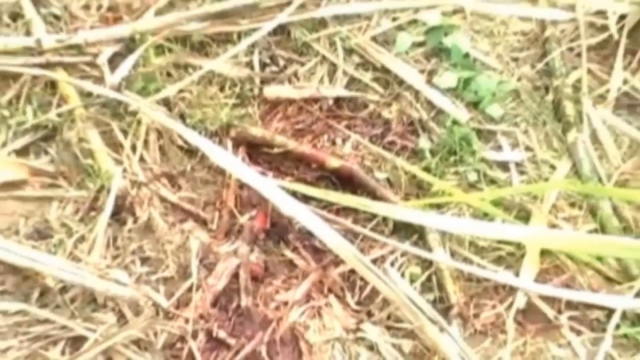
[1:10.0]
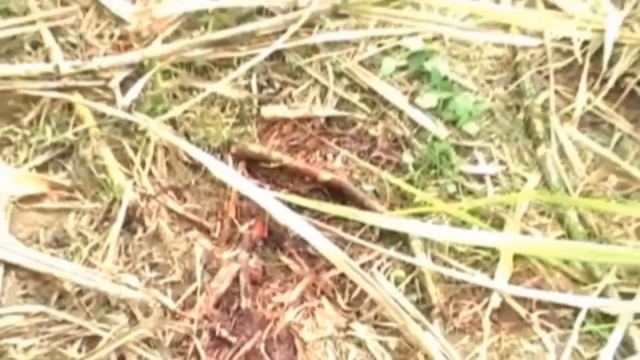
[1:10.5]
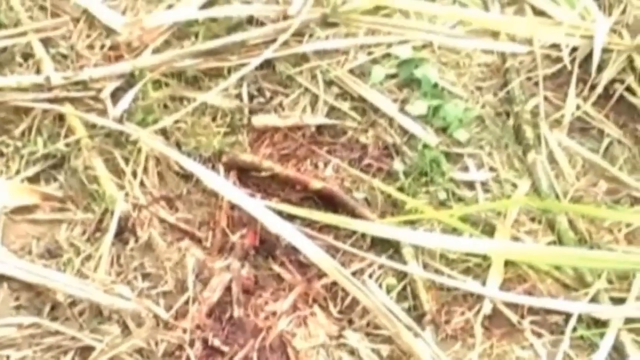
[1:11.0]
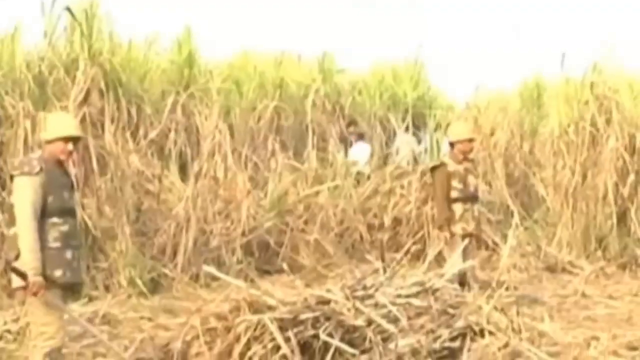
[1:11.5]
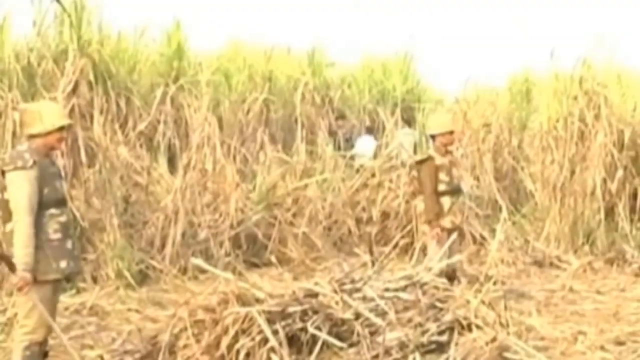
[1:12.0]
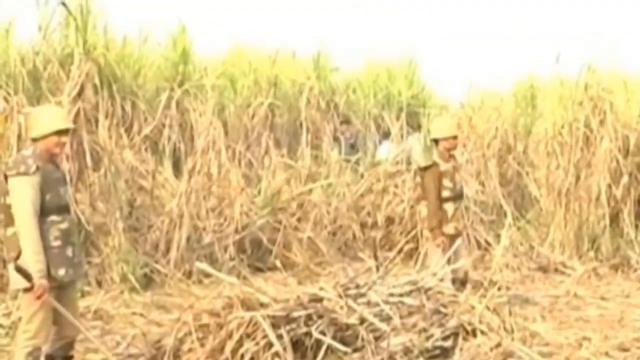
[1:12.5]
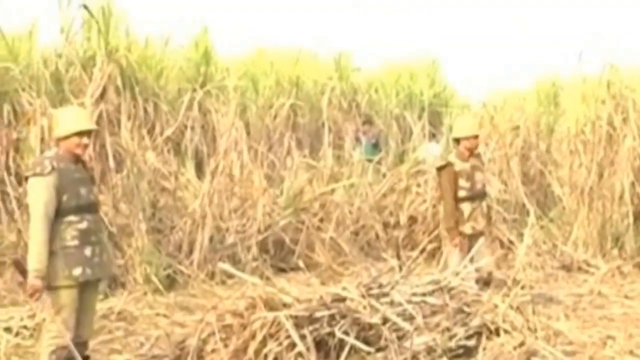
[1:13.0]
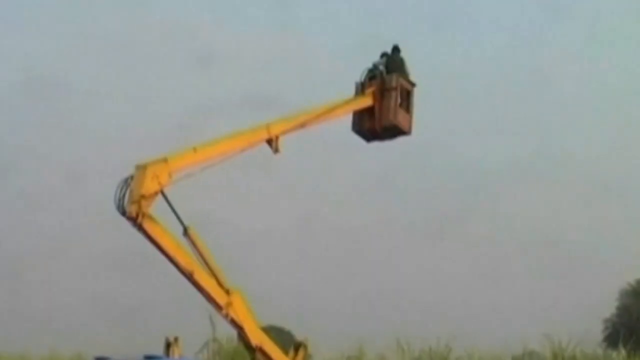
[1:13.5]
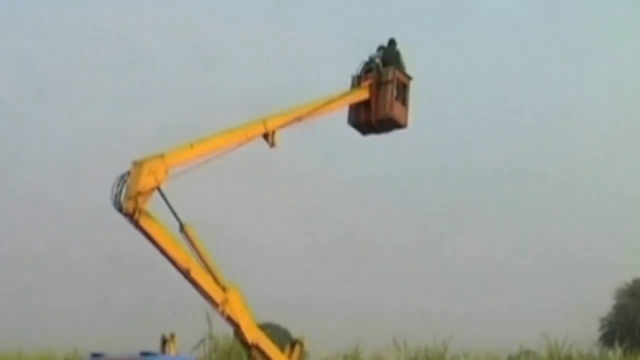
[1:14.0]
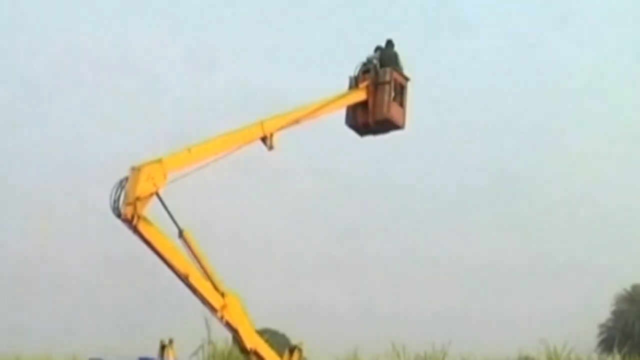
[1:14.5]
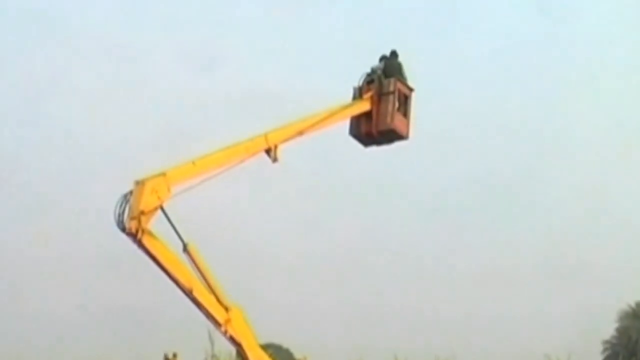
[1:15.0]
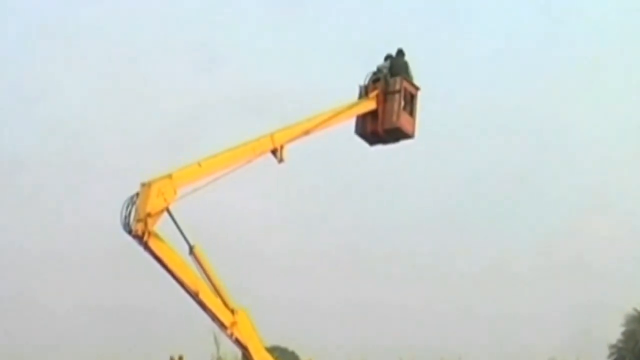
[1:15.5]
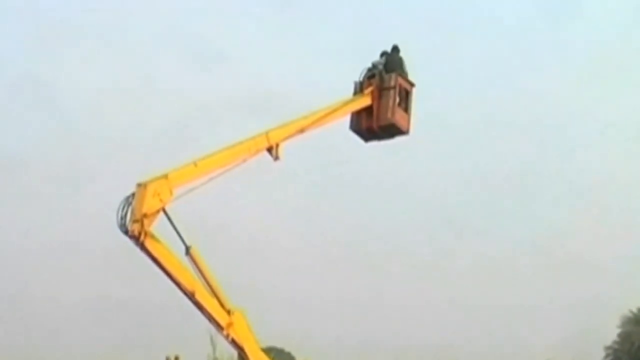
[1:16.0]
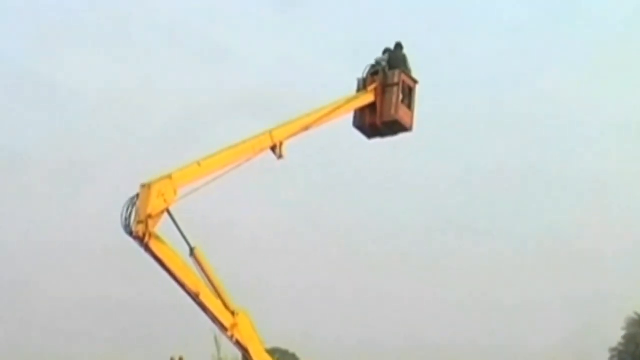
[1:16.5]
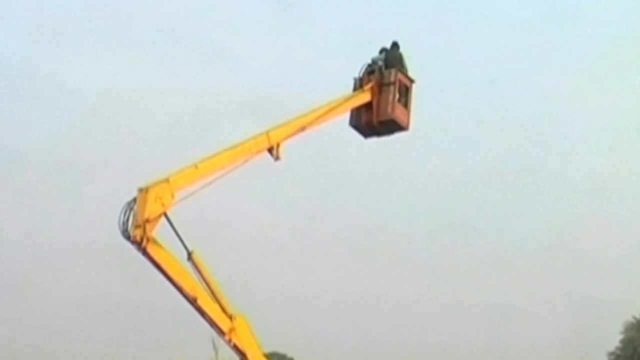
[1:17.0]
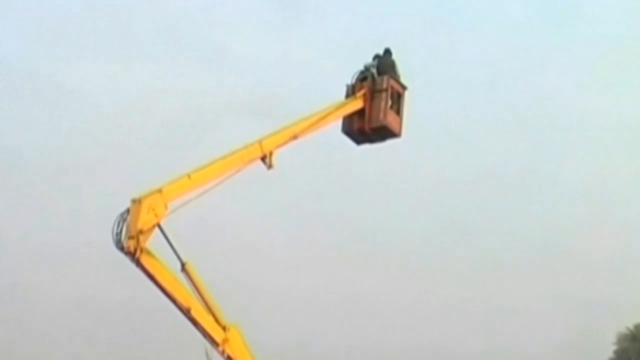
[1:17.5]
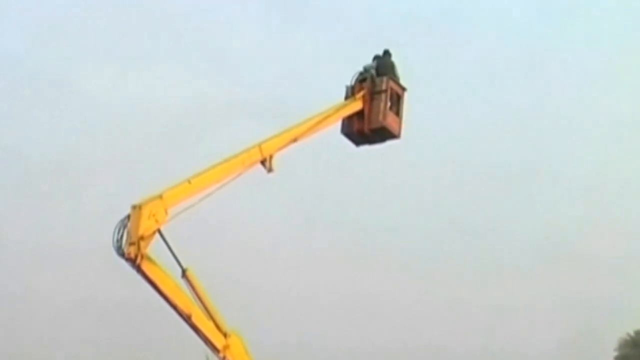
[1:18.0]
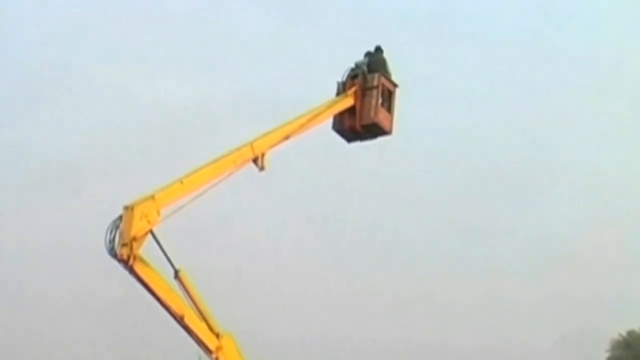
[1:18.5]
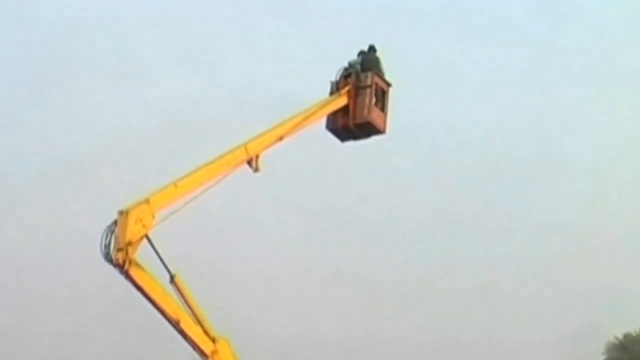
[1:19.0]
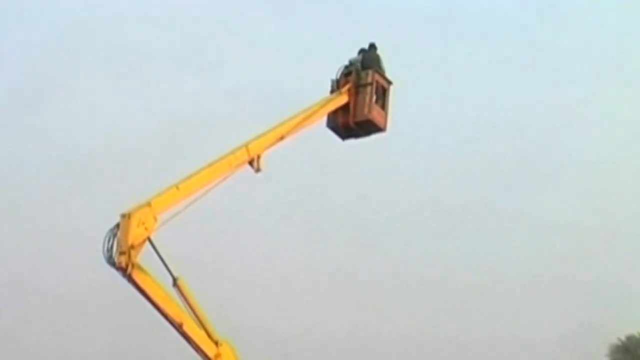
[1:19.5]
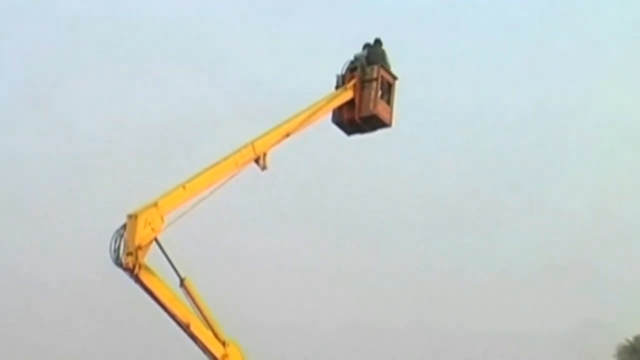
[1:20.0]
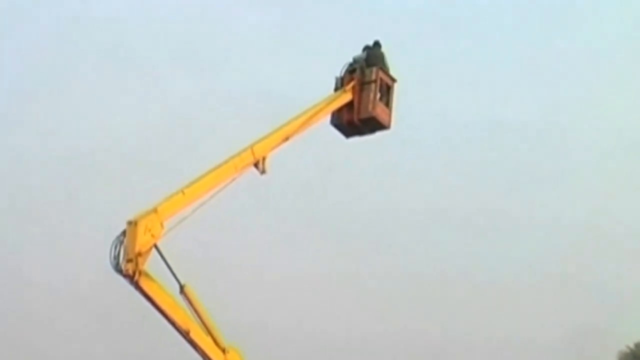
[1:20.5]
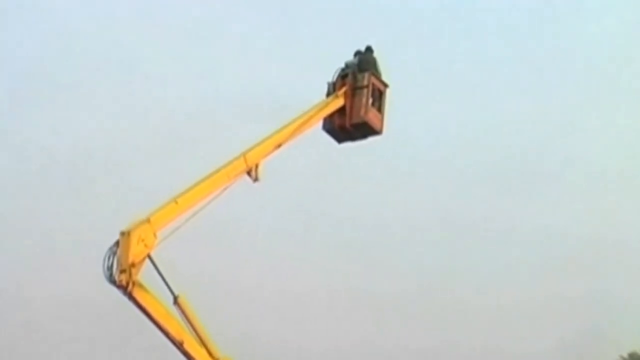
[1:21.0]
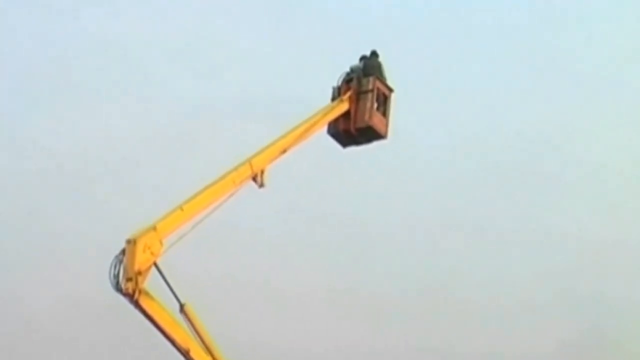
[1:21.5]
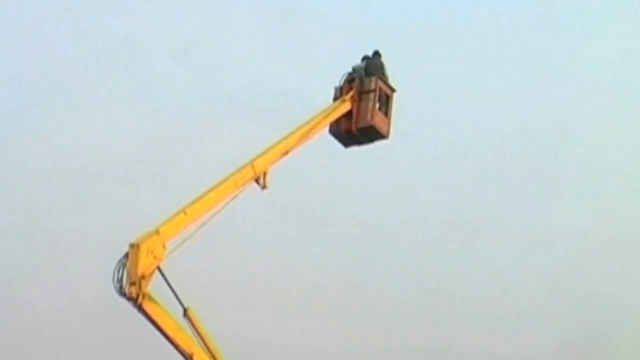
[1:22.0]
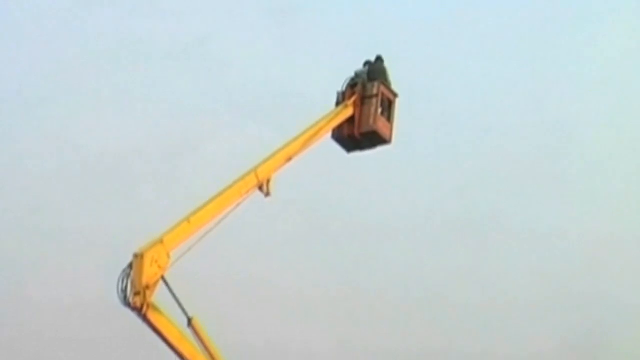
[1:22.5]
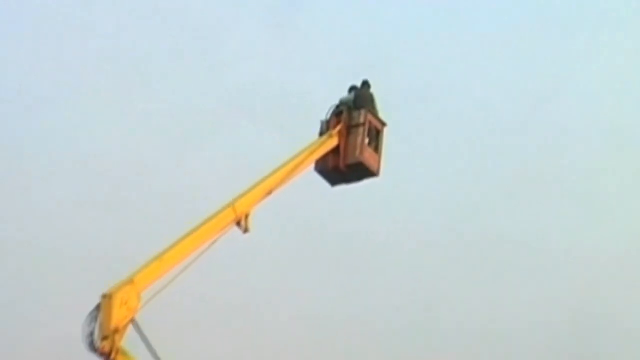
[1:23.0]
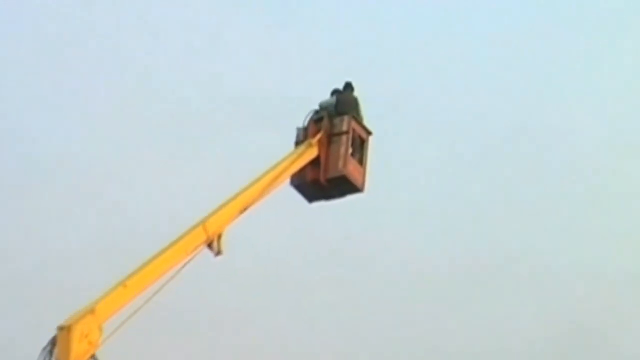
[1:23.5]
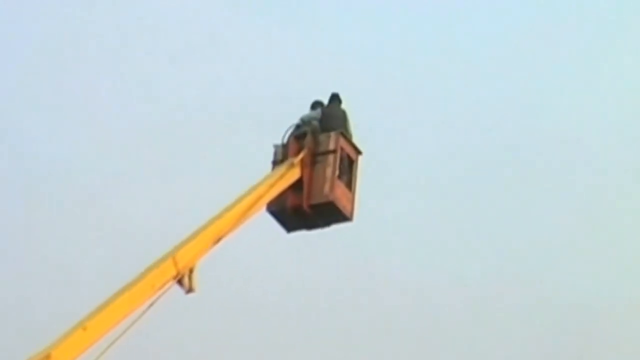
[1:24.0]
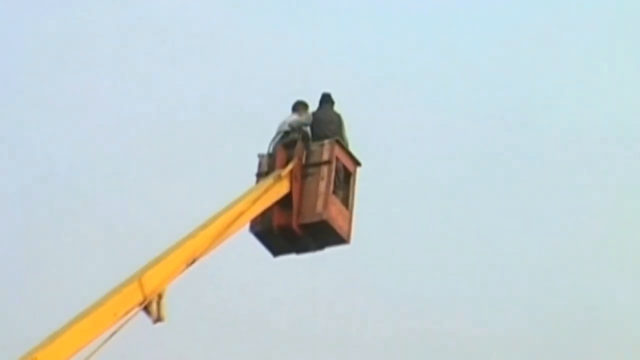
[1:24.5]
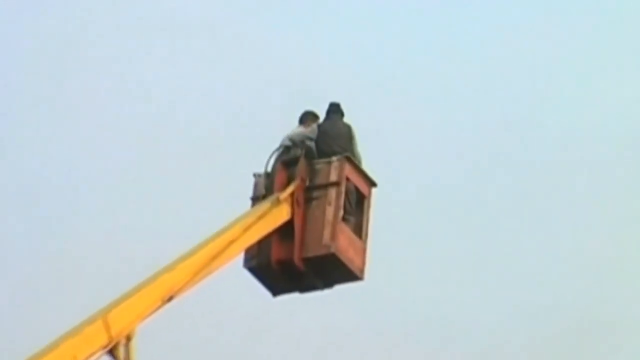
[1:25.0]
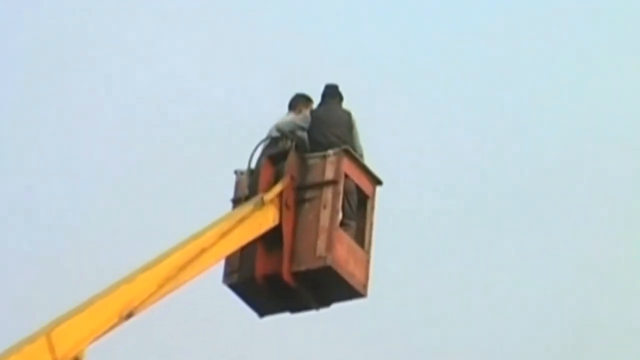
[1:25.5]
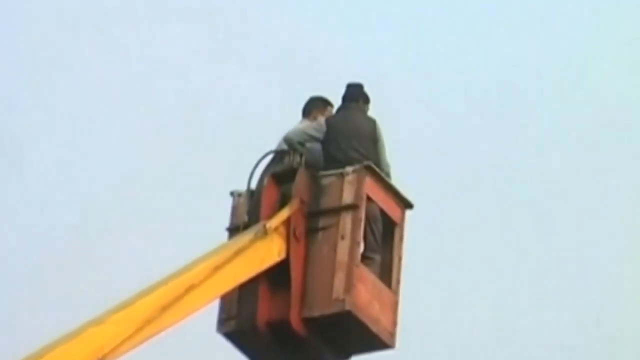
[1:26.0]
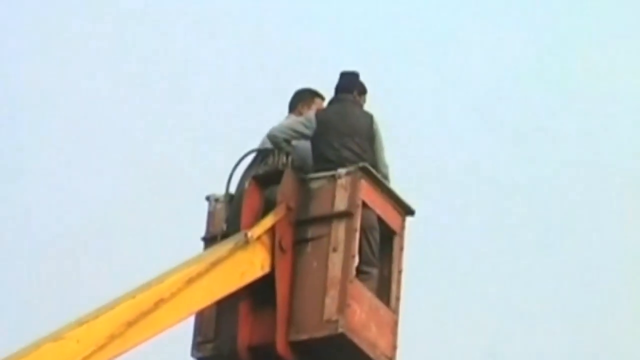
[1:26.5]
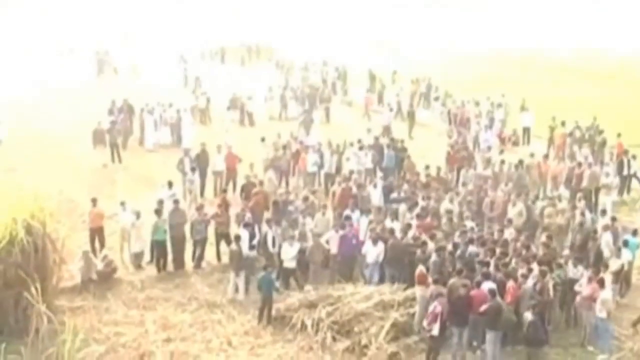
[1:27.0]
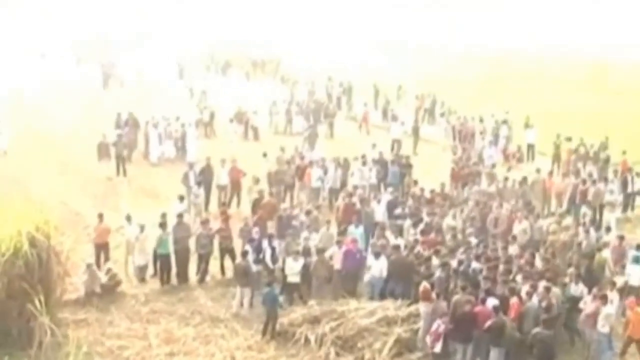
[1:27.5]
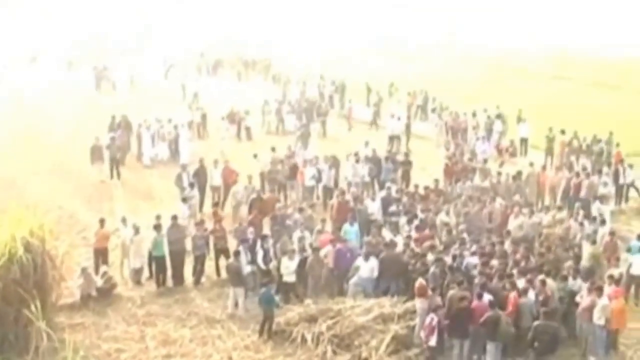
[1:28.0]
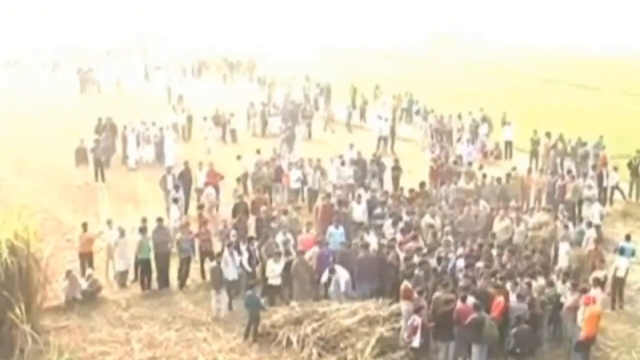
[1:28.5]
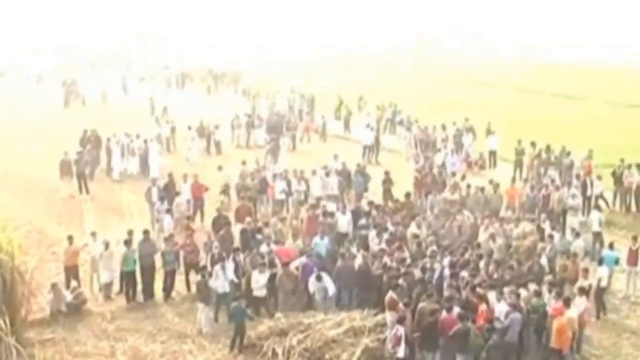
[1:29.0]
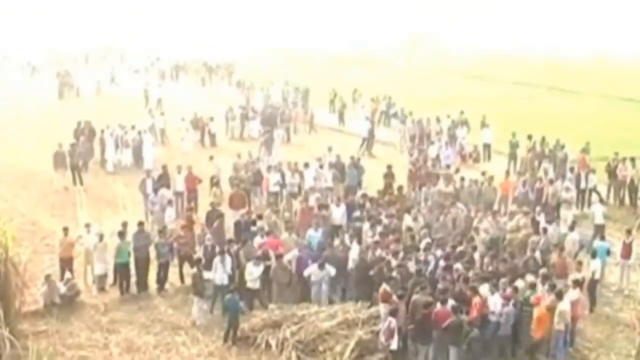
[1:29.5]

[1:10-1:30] The shot opens on the blood in the grass and mud. People are raised high into the sky on some kind of forklift, possibly to track the tiger's location, while many villagers stand below. Military personnel comb through the grasslands. It is unclear exactly what is going on, but the people seem to be coming together to kill the tiger. Many people look worried, standing around unsure of what to do next.